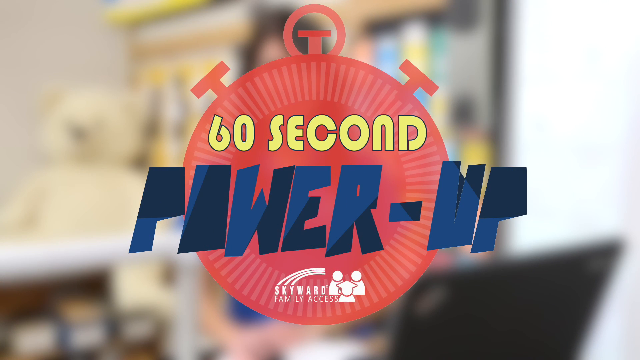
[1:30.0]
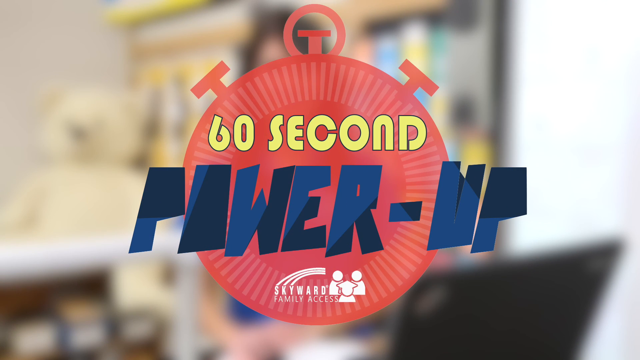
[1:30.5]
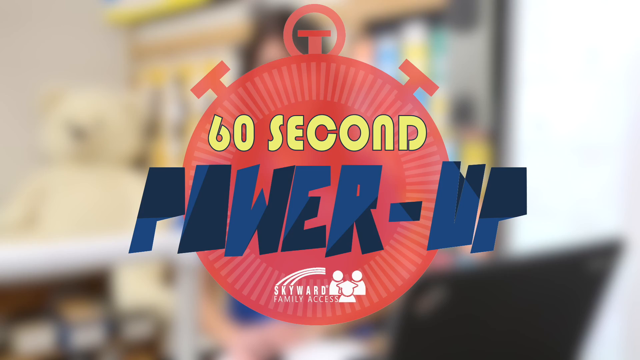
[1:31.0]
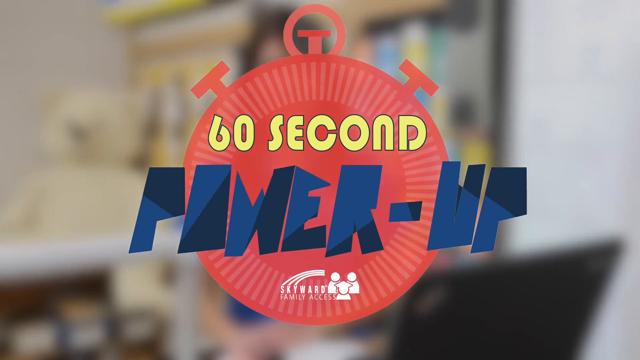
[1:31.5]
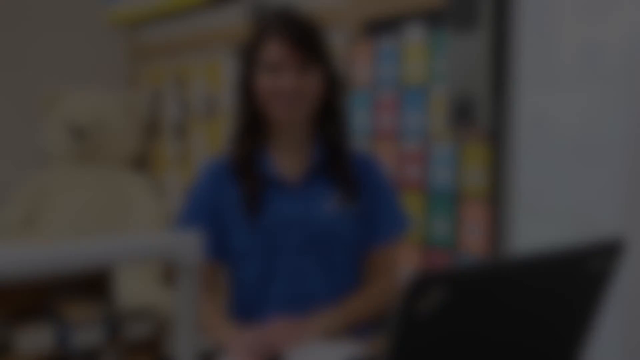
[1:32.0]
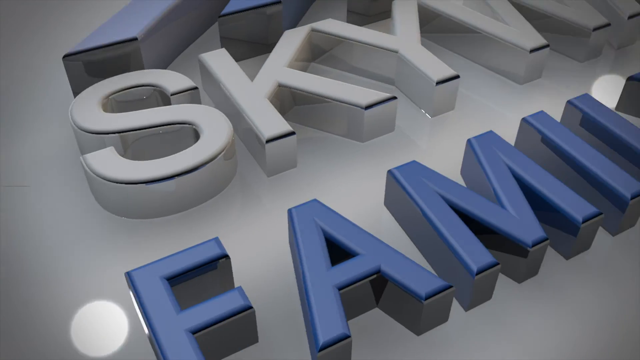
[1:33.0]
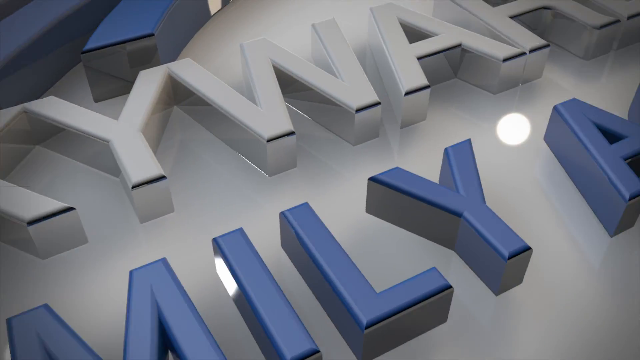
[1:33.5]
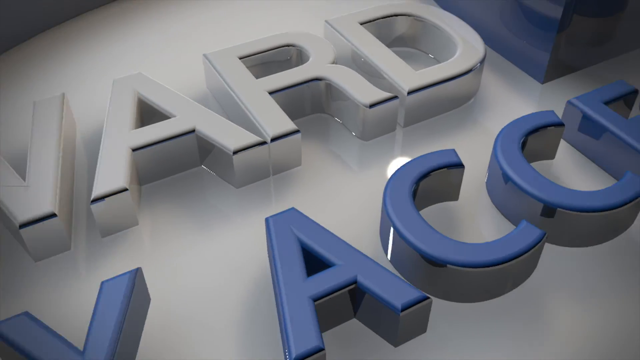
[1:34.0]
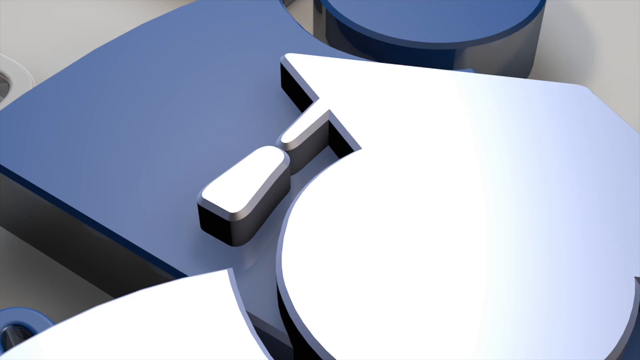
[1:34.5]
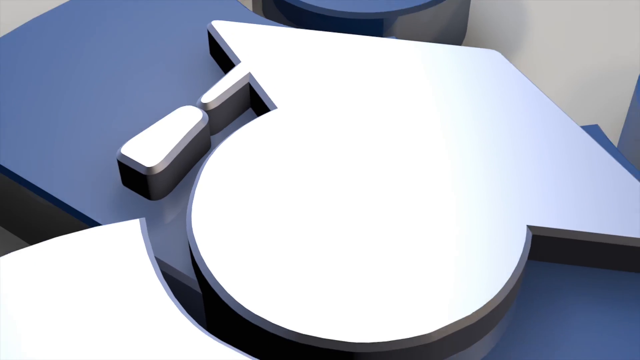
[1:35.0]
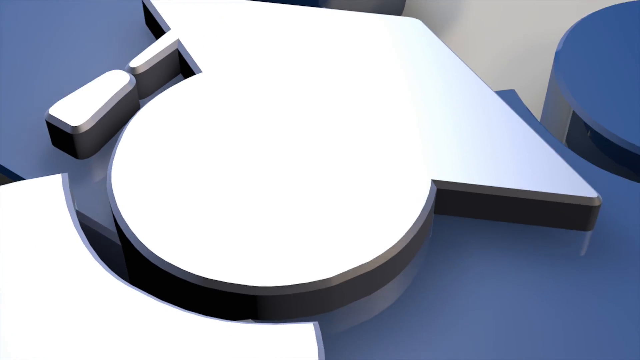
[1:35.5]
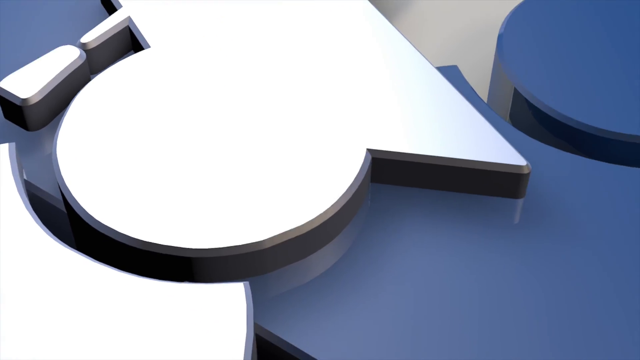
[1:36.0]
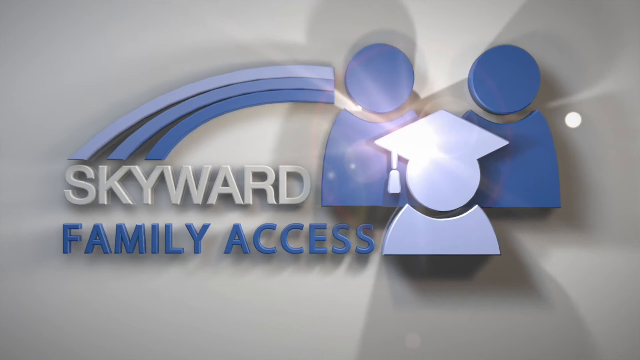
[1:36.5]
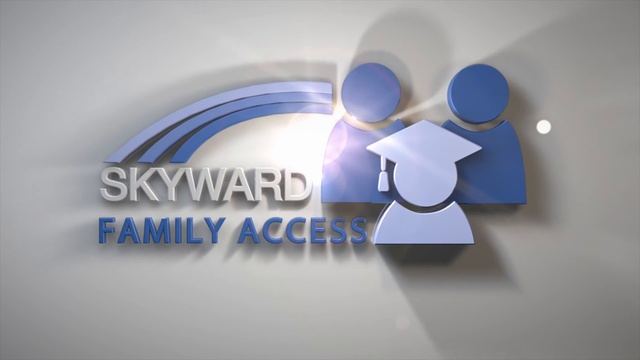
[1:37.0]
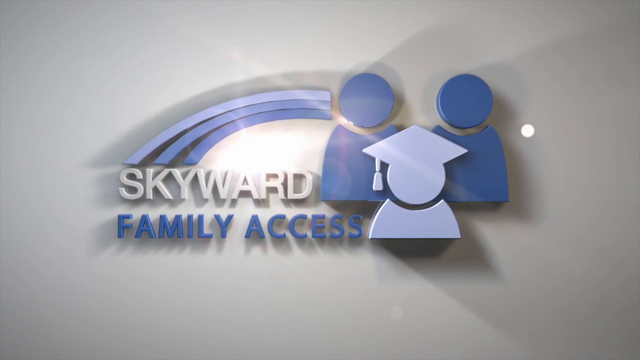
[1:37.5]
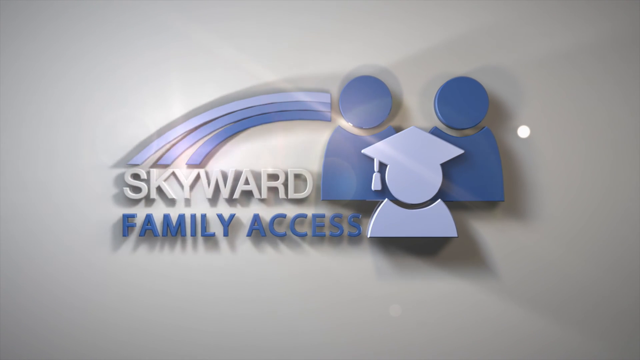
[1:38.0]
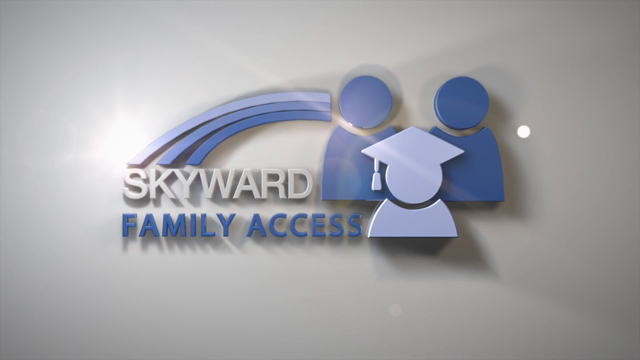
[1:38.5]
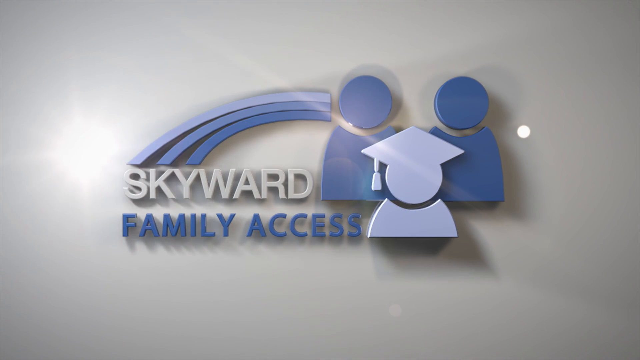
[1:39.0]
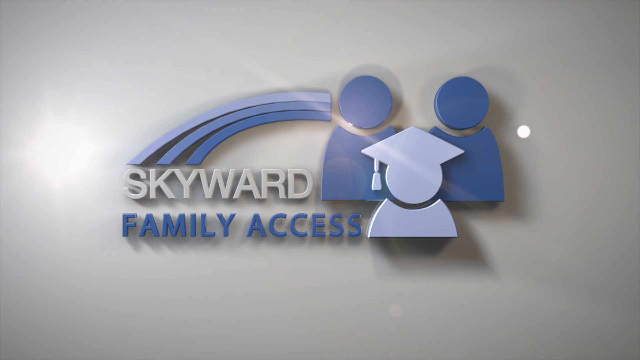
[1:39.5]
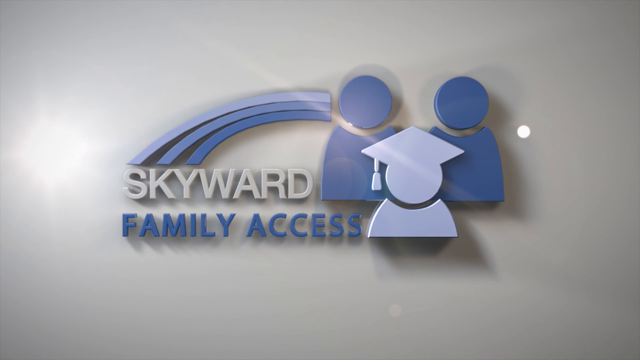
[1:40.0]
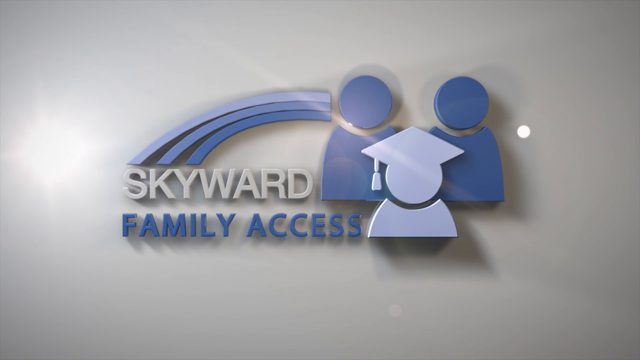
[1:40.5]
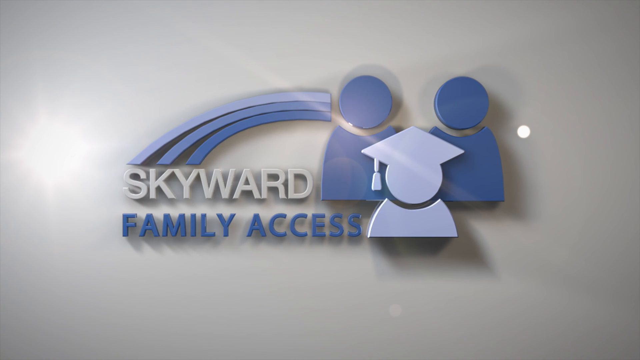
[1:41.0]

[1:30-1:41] The woman from the beginning is shown again, still in front of the laptop, announcing something with a smile. The red timer icon appears again, covering almost the full height of the screen in the center, with text that says "60 seconds". Below it comes the logo of the company or school, Skyward Family Access. Finally, one last animation like the intro shows the Skyward Family Access logo as a 3D model with the graduate and its parents behind. The video ends here.